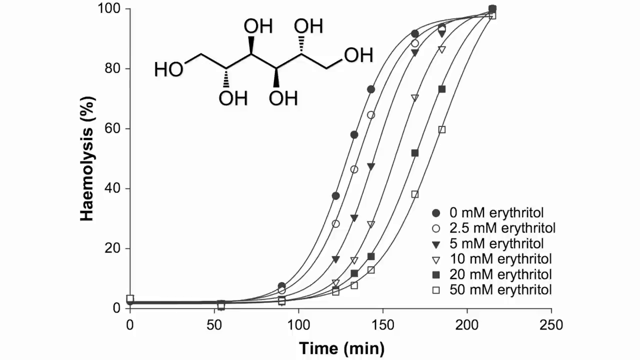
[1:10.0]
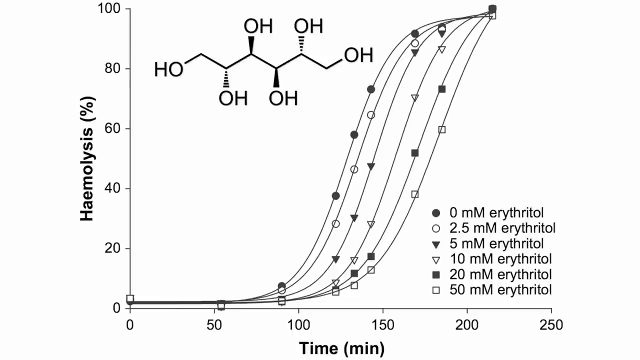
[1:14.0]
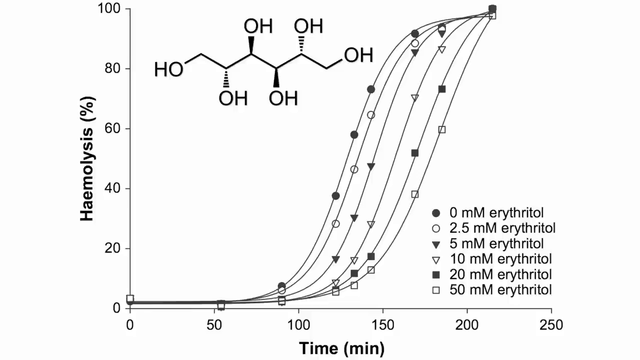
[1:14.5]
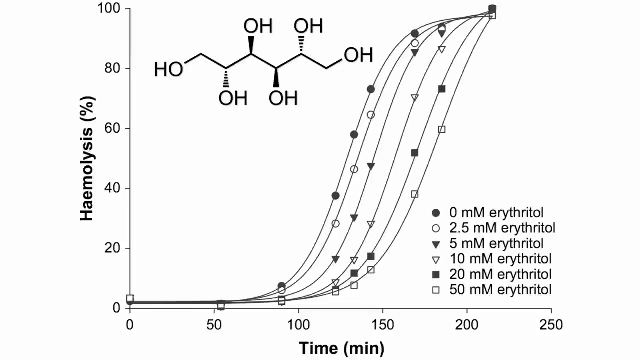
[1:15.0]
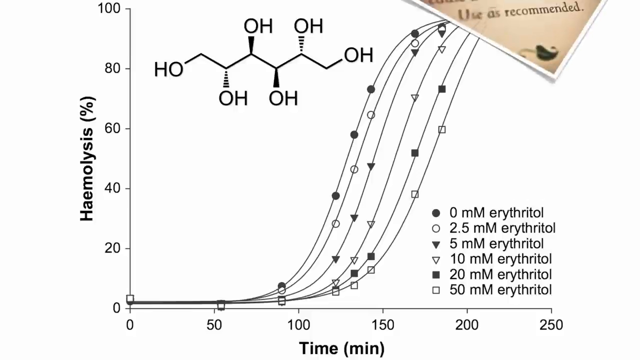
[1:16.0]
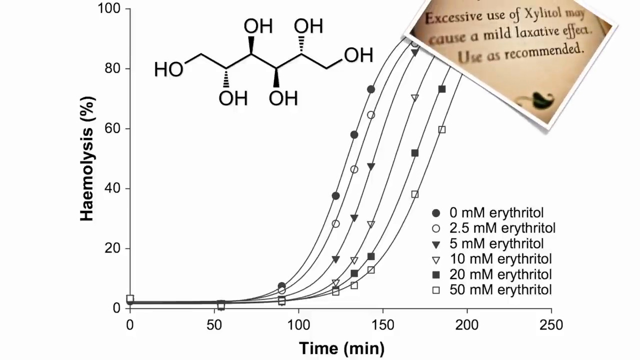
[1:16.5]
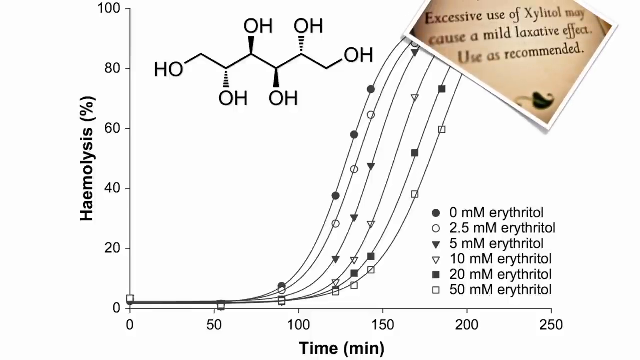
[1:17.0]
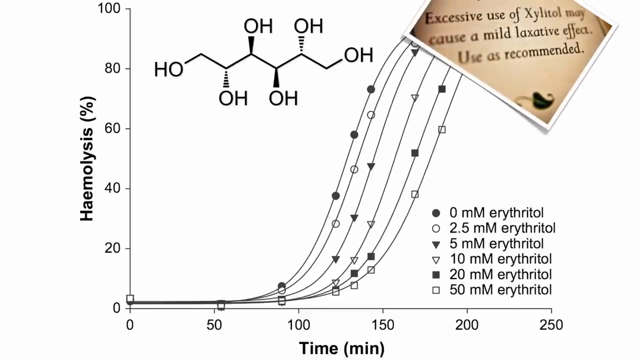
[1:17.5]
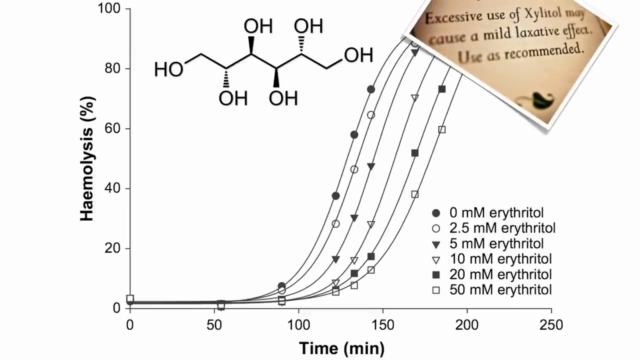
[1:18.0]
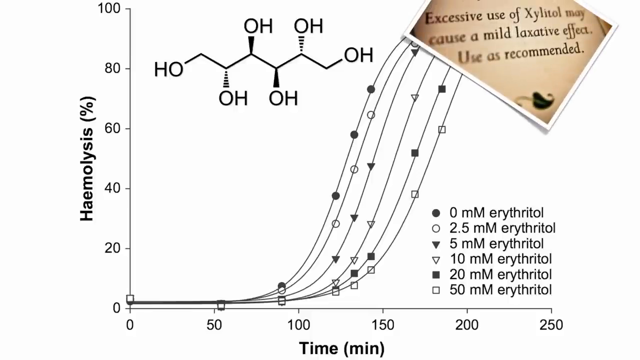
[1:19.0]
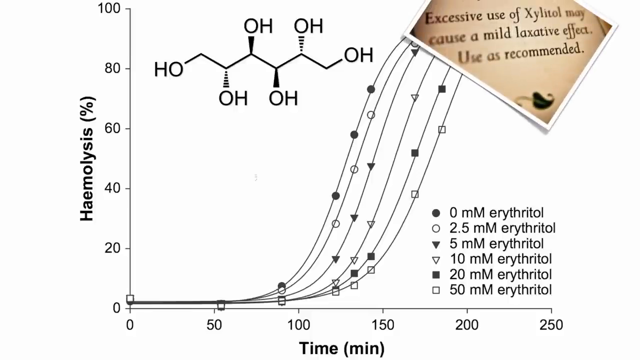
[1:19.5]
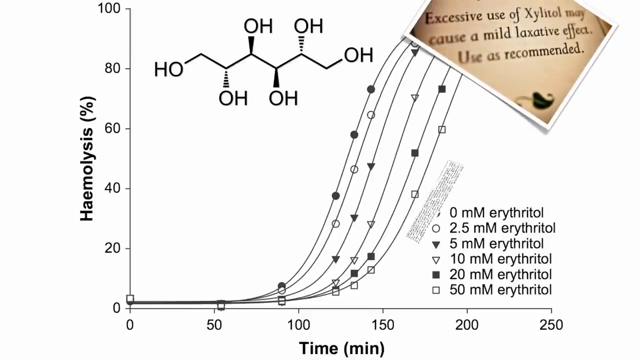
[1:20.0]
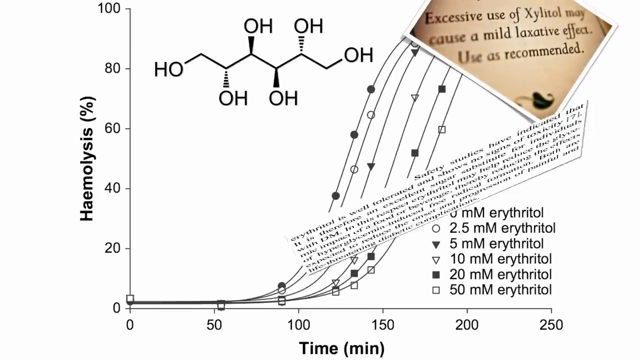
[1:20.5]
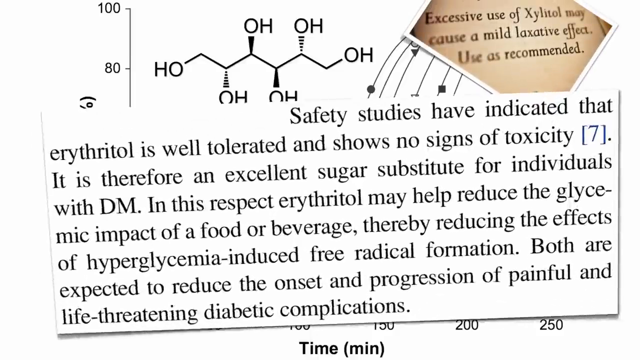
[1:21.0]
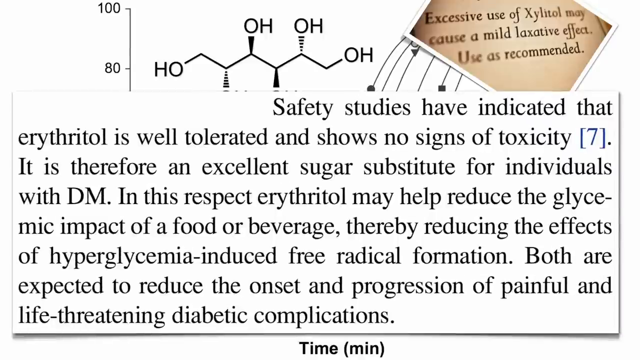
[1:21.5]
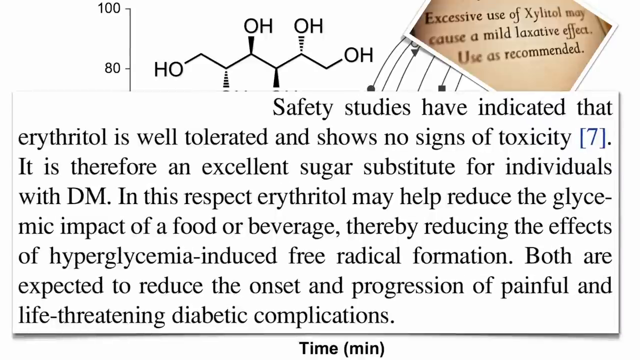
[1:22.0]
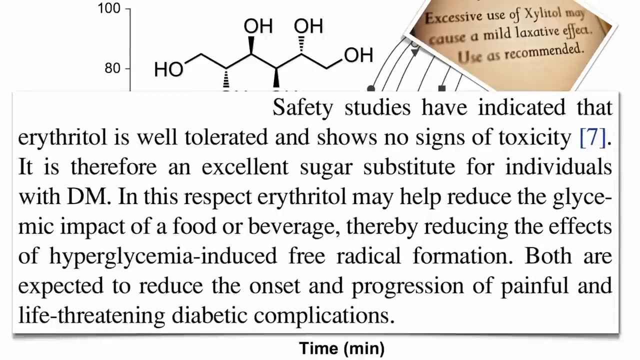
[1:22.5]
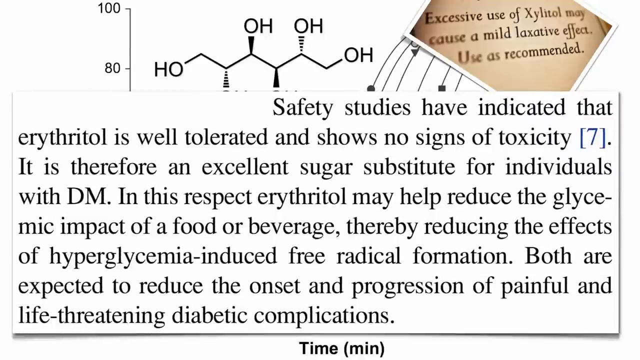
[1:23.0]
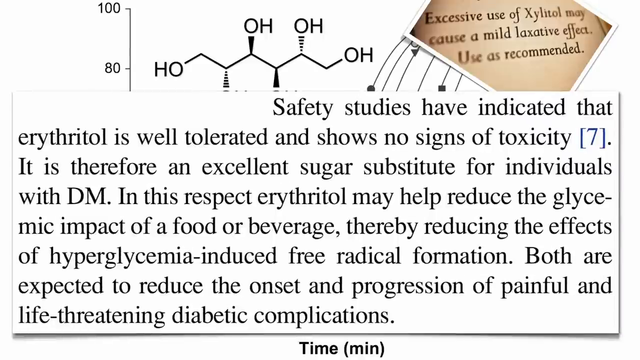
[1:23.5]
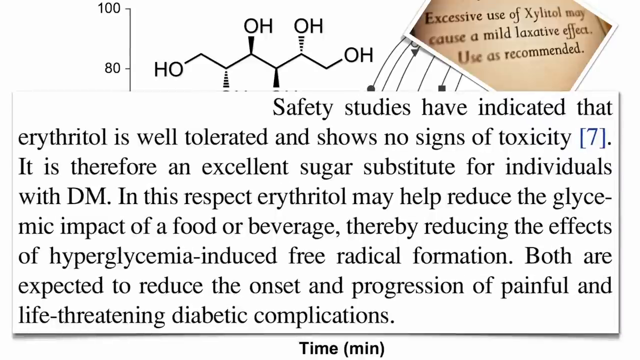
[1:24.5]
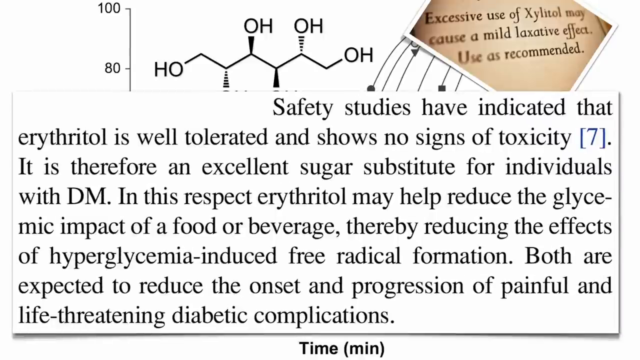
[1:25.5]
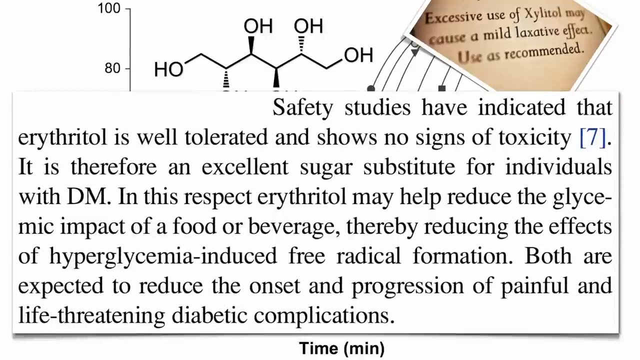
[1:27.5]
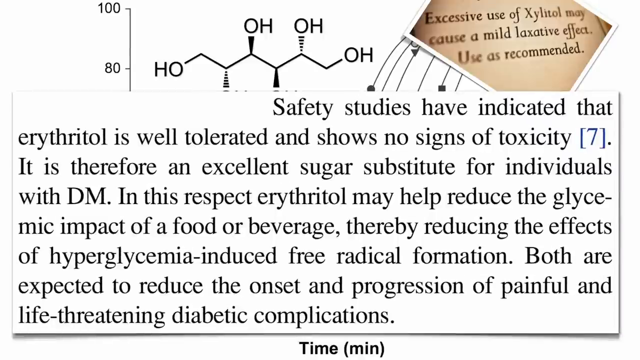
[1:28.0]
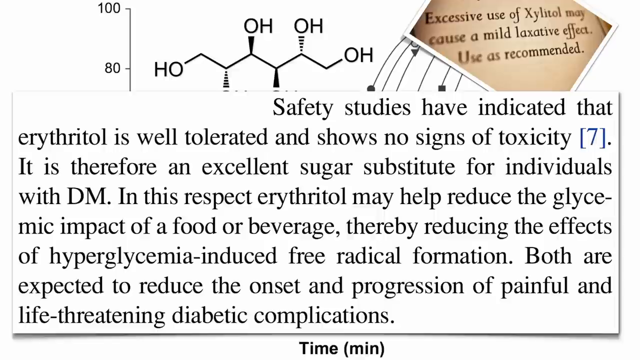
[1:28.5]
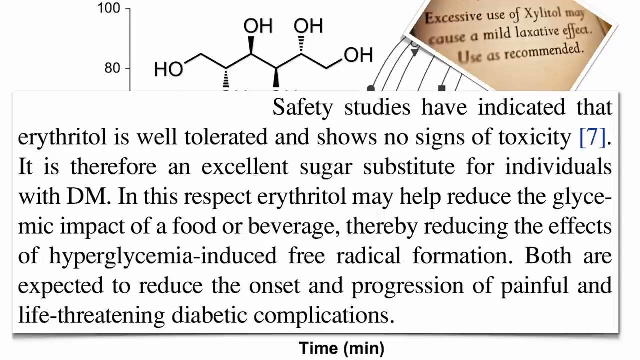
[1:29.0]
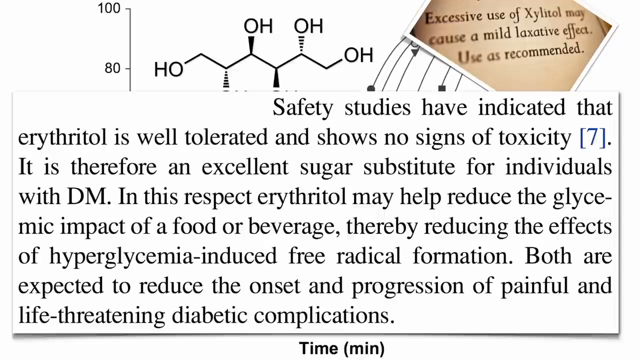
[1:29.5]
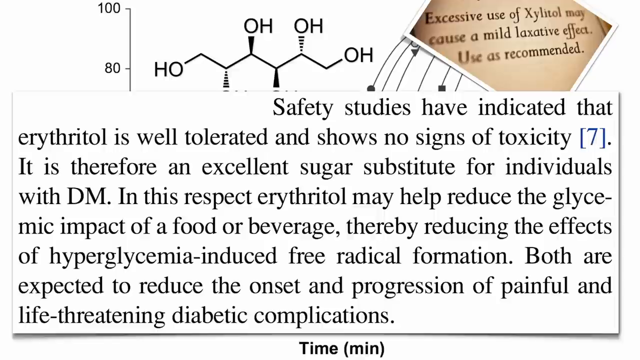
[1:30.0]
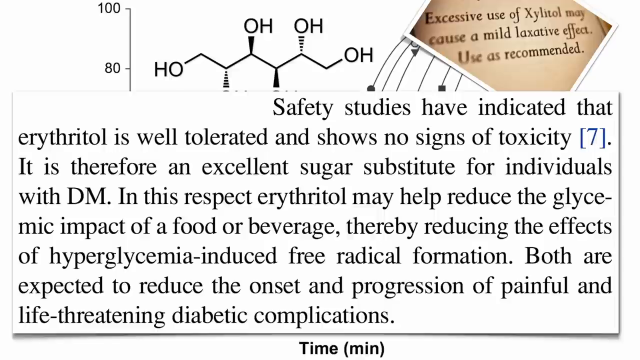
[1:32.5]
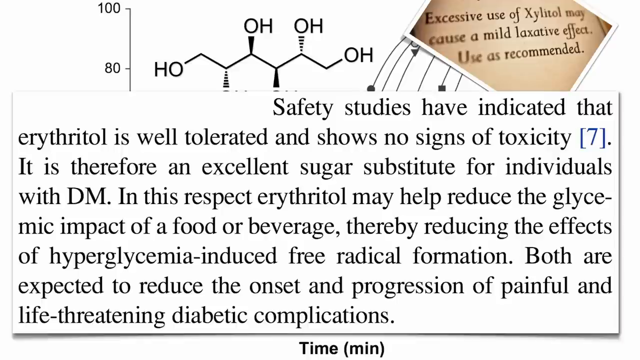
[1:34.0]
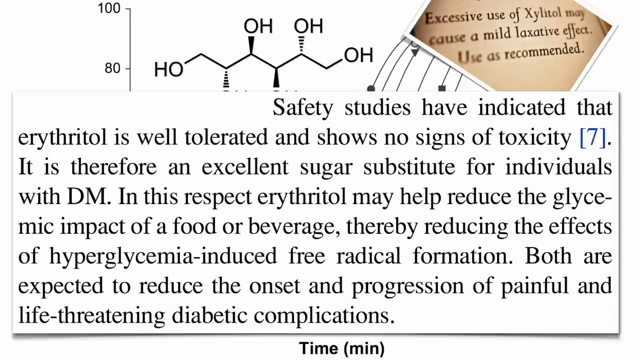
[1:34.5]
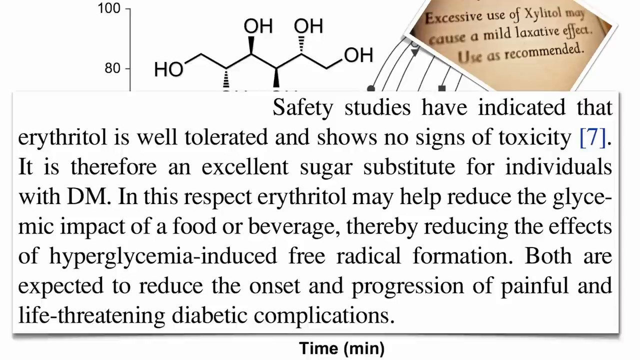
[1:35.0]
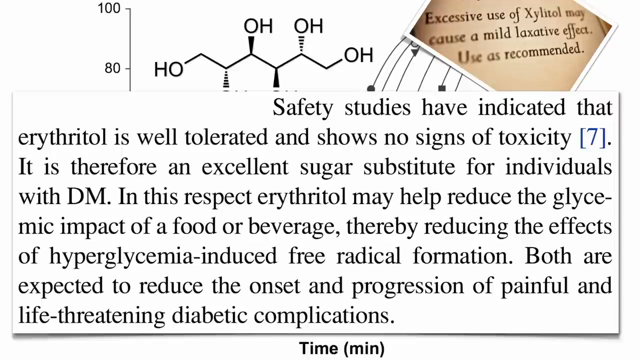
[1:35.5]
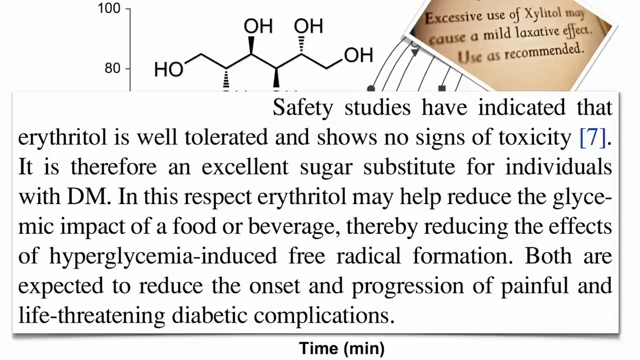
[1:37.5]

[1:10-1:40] A chart appears with the word "hemolysis" to its left. Numbers from 0 to 100 run along the left of the chart and 0 to 250 along the bottom. At the top right, a small message appears on a tan background in black letters: "excessive use of Xylitol may cause a mild laxative effect. Use as recommended." Next, black letters on a white background read: "safety studies have indicated that erythritol is well tolerated and shows no signs of toxicity. It is therefore an excellent sugar substitute for individuals with DM. In this respect, erythritol may help reduce the glycemic impact of a food or beverage, thereby reducing the effects of hyperglycemia induced free radical formation. Both are expected to reduce the onset of and progression of painful and life-threatening diabetic complications."